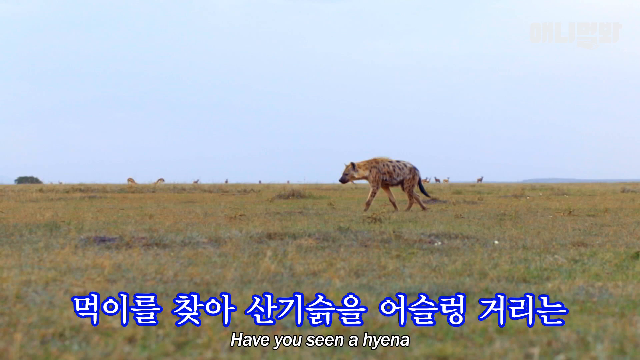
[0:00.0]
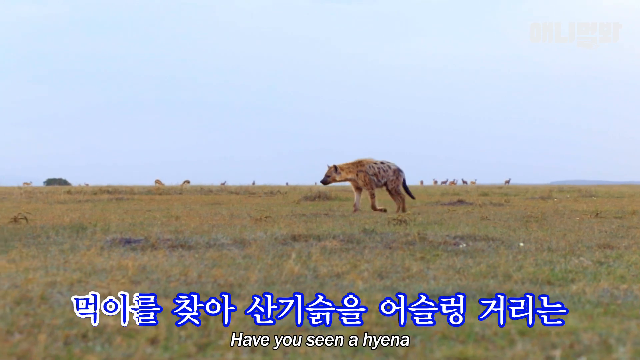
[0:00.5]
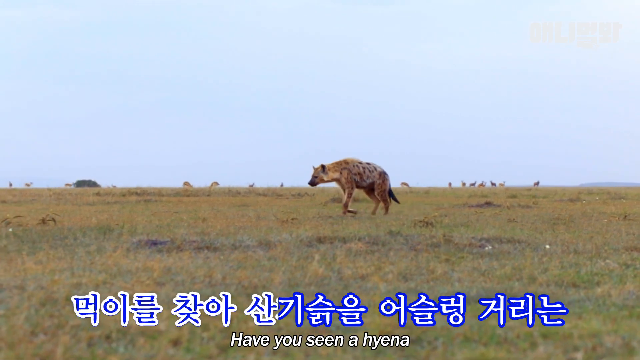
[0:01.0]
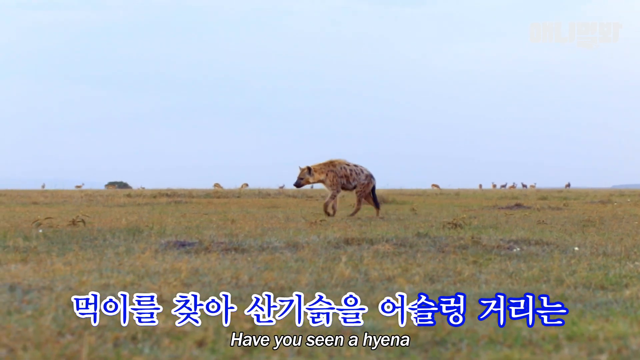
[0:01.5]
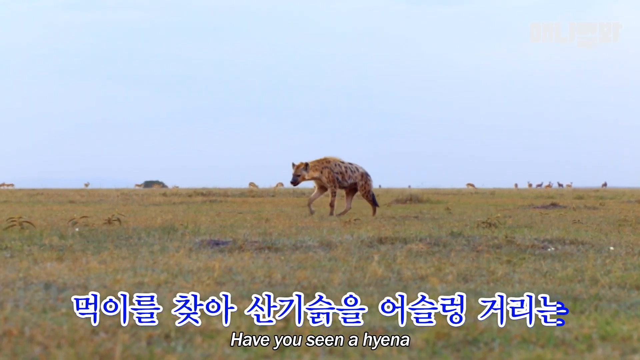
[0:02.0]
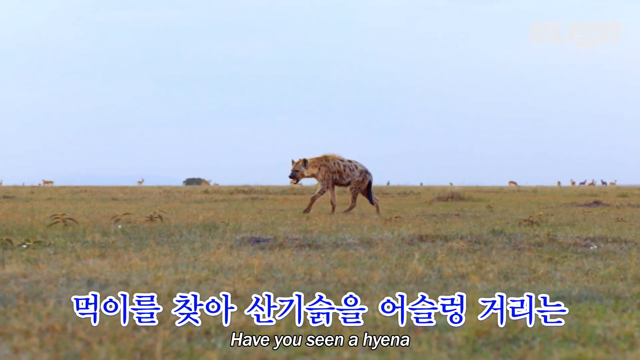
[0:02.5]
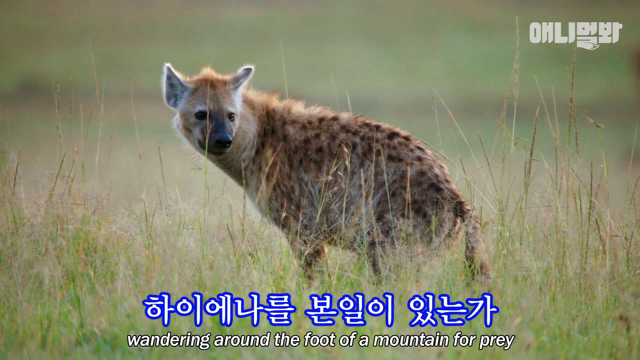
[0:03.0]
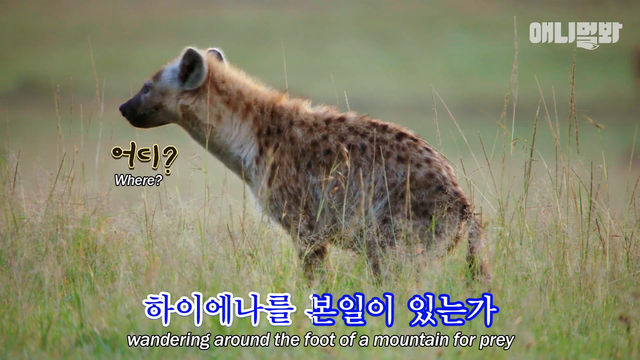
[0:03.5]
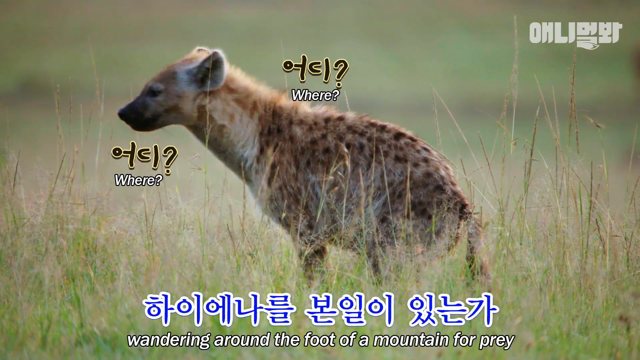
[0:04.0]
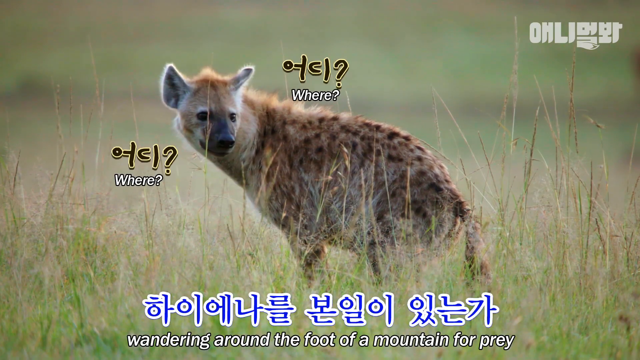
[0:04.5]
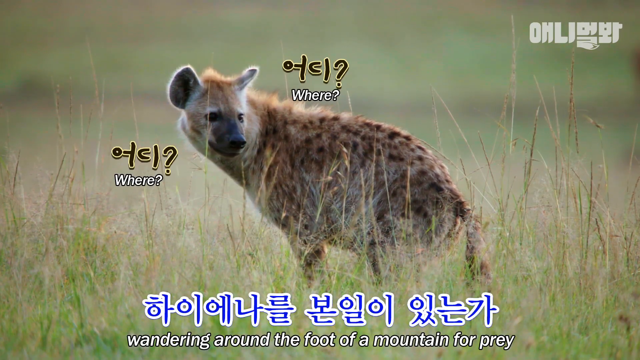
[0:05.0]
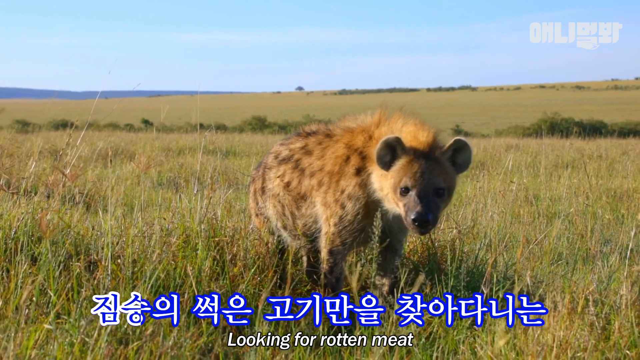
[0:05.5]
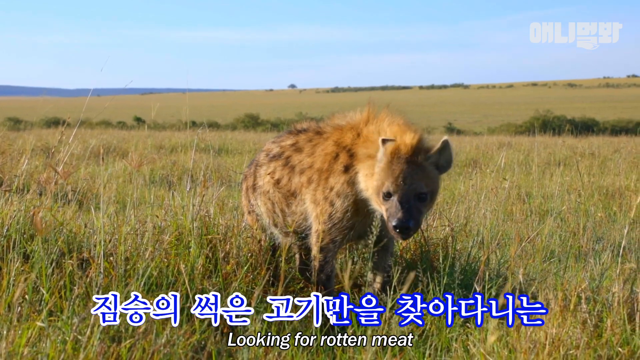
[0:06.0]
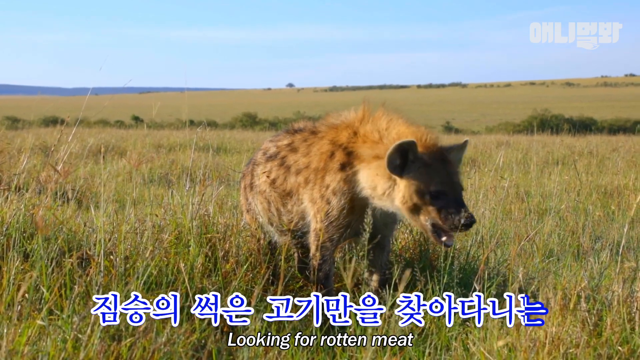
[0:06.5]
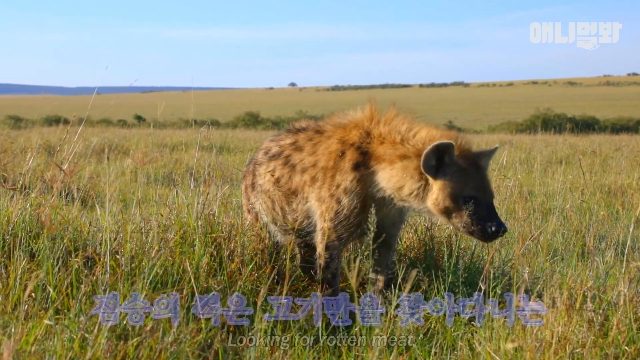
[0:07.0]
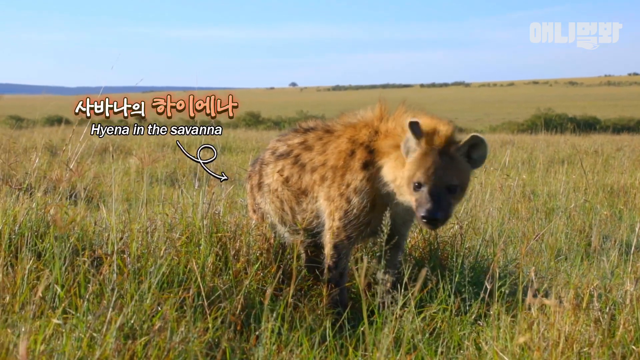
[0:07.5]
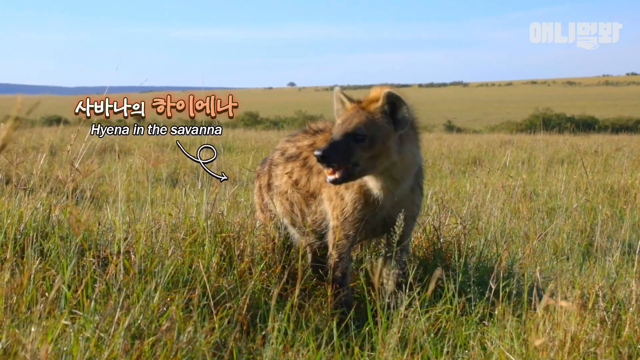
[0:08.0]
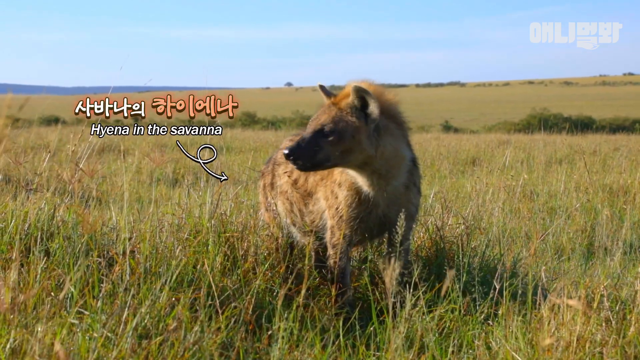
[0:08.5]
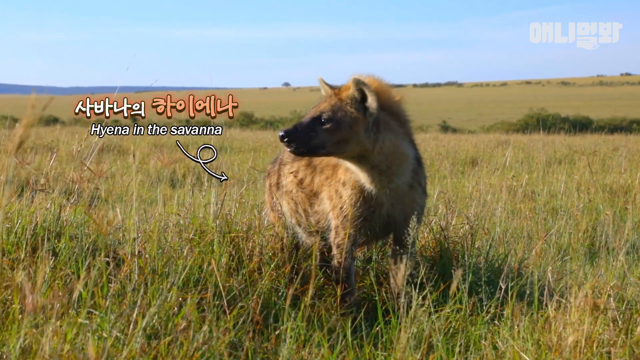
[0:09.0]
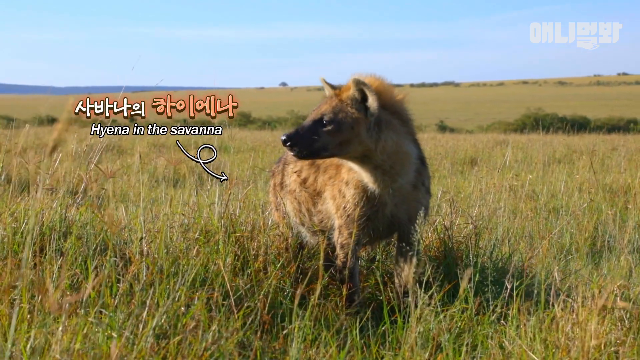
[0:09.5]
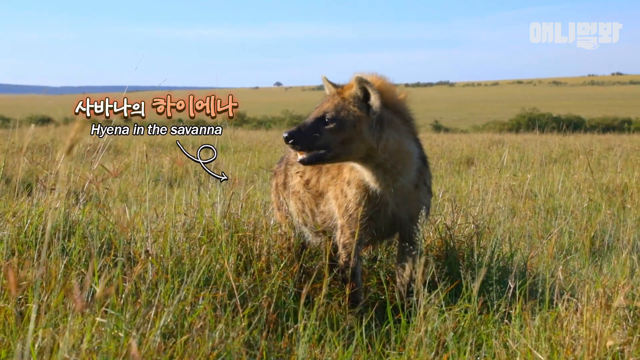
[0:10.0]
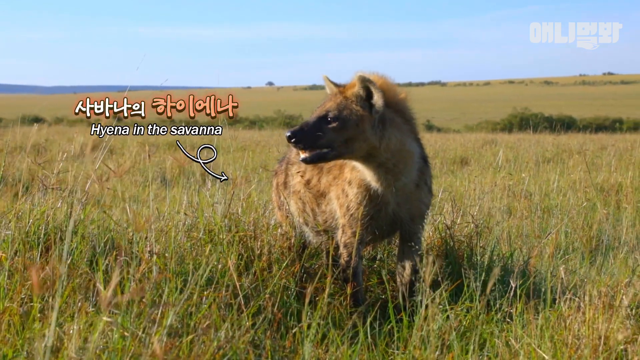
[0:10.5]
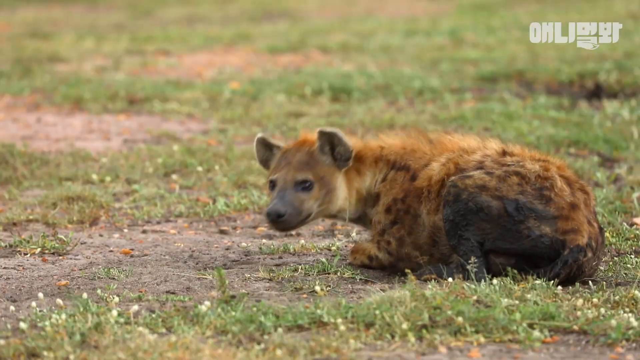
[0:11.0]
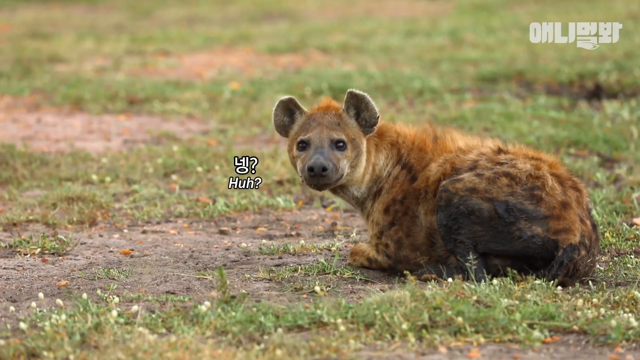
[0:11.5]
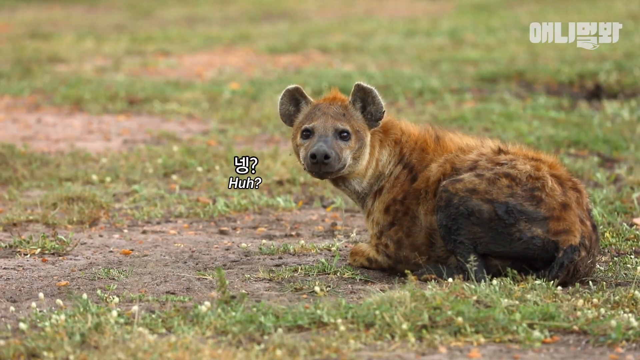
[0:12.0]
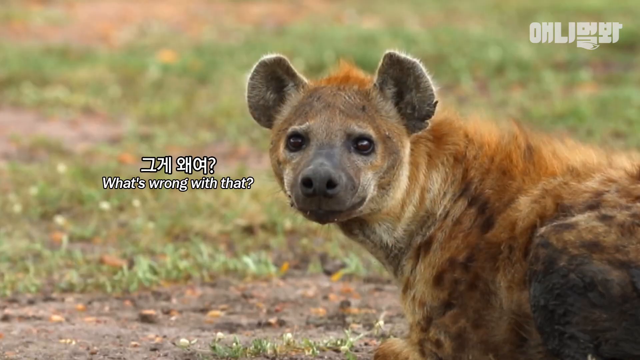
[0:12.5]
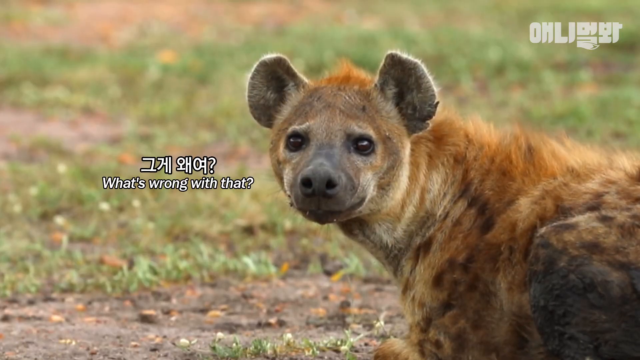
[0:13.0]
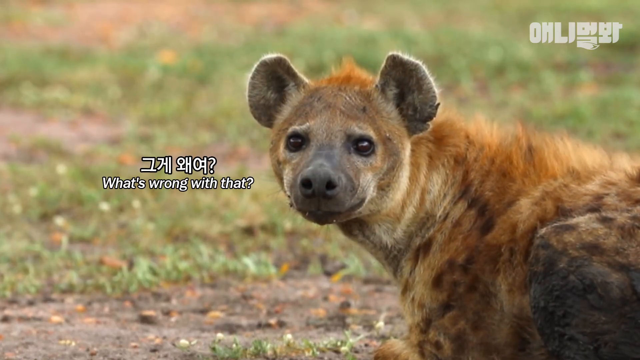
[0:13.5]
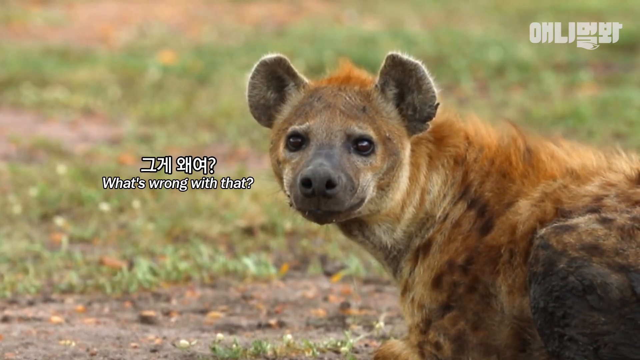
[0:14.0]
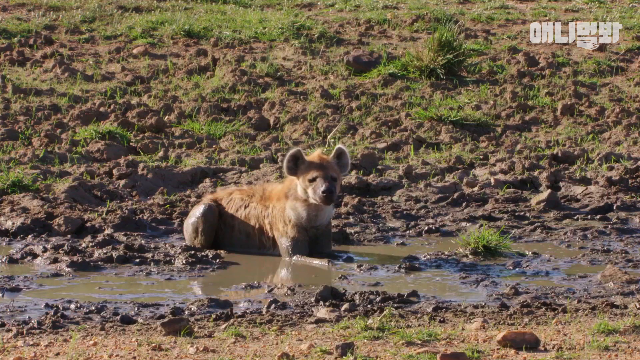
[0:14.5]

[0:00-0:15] Apparently around two to three hyenas are shown. They look like typical wild hyenas, something like a feral dog, with sharp teeth, brown fur and black spotted ears. The on-screen captions seem to indicate that they are searching for prey. The hyenas appear to be idling in various positions. The setting appears to be the open savanna, presumably somewhere in Africa. The video seems to feature a lot of captions.